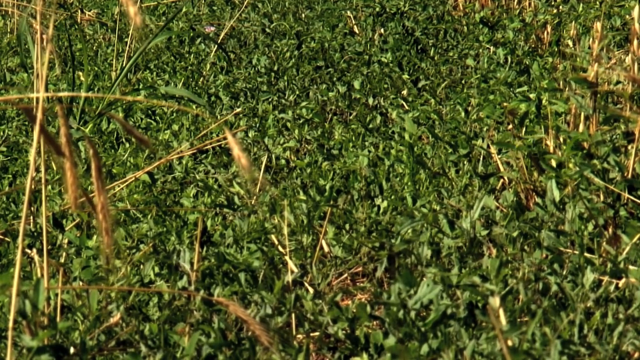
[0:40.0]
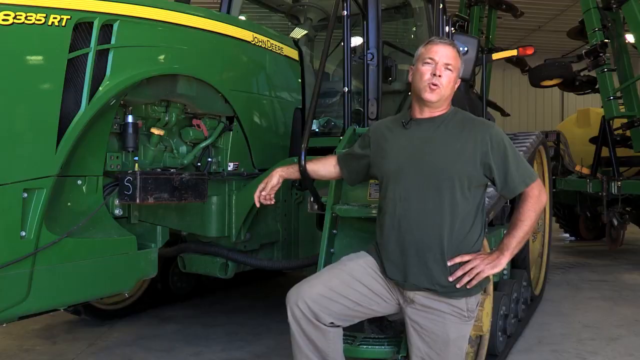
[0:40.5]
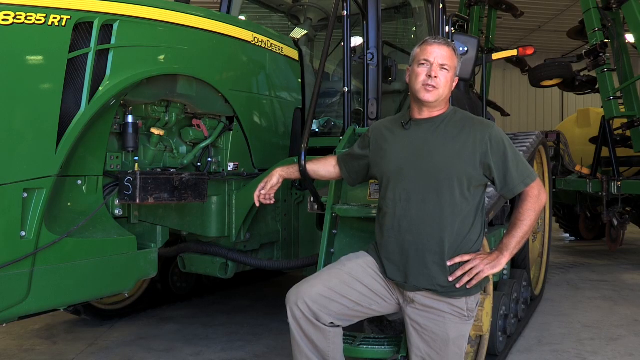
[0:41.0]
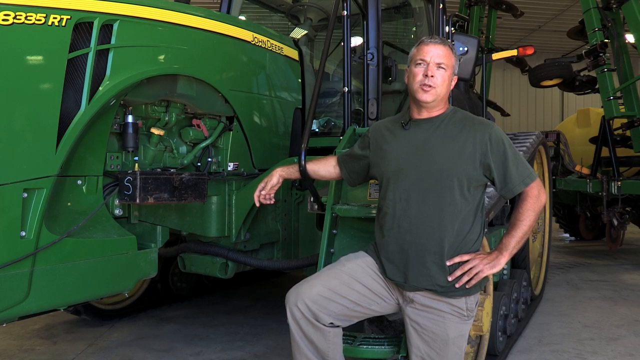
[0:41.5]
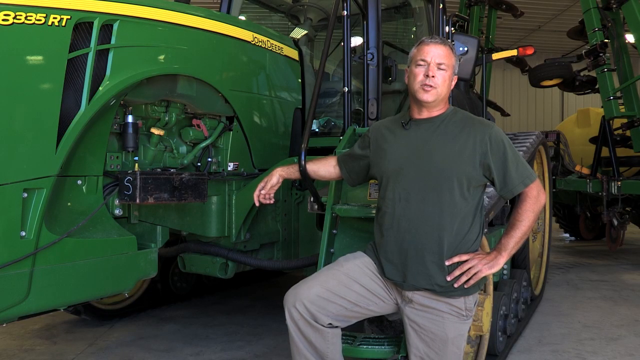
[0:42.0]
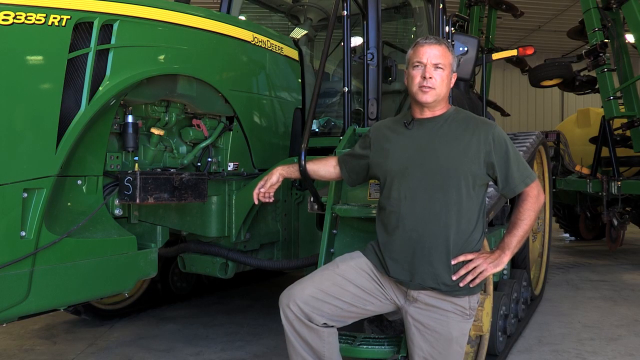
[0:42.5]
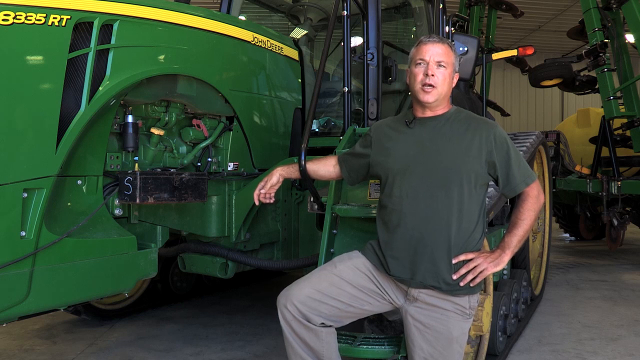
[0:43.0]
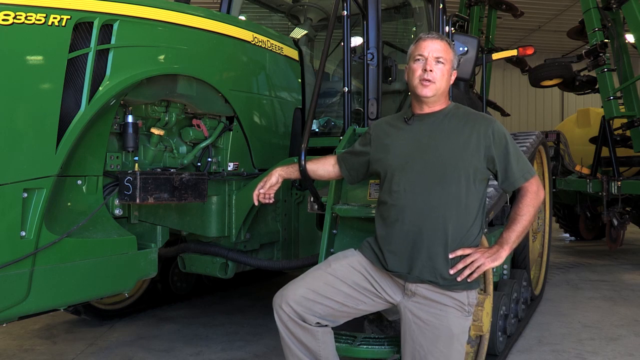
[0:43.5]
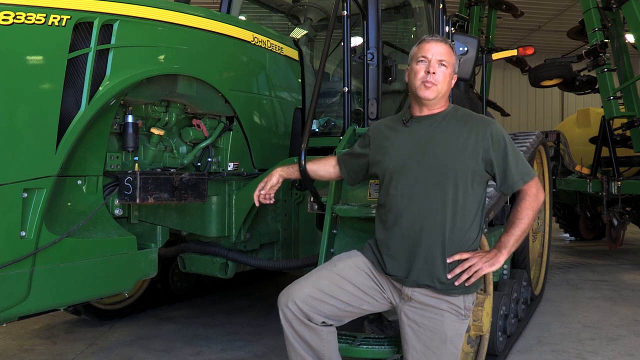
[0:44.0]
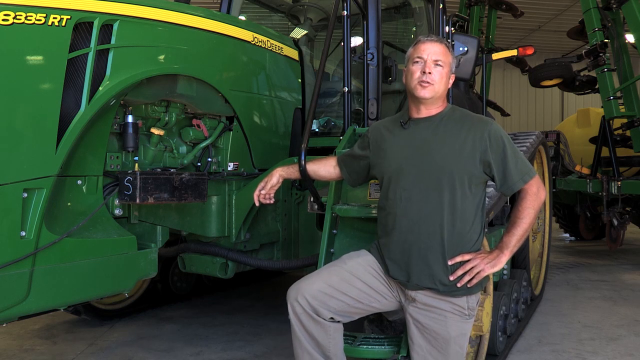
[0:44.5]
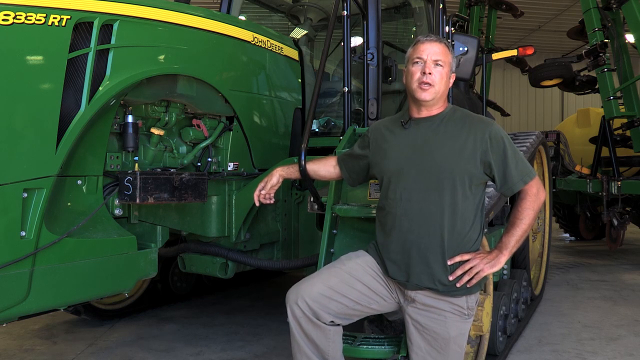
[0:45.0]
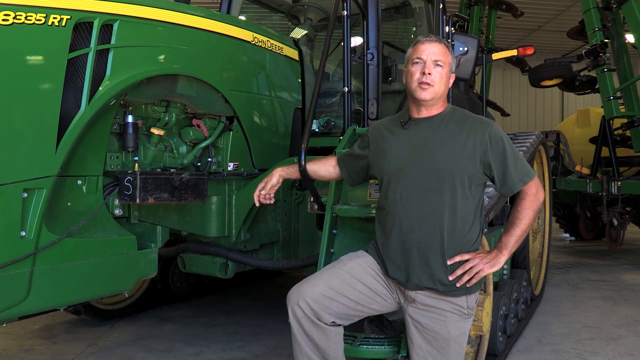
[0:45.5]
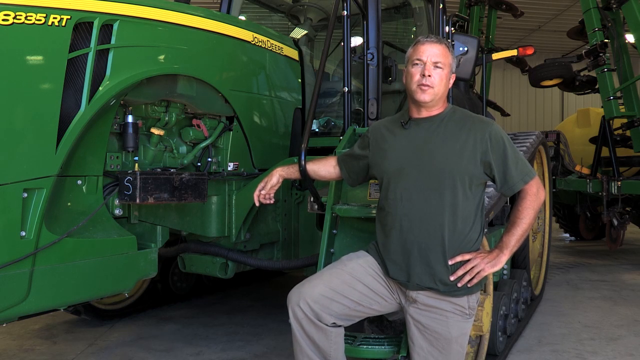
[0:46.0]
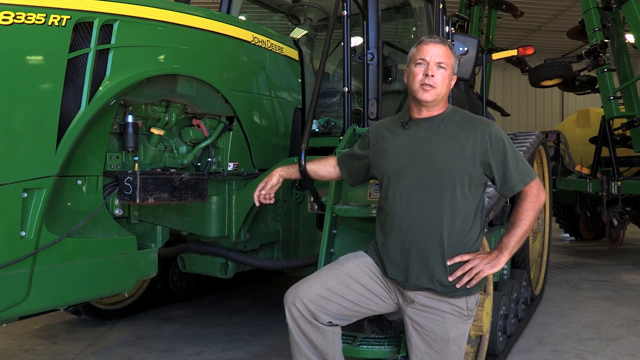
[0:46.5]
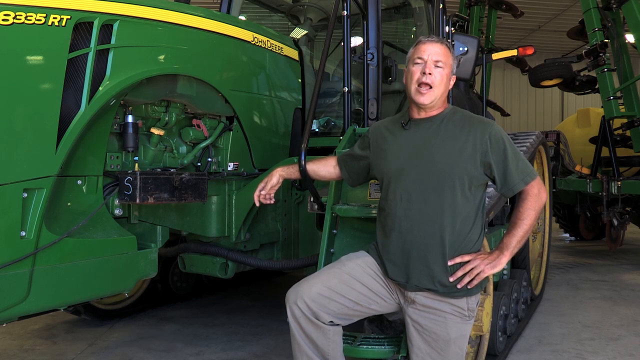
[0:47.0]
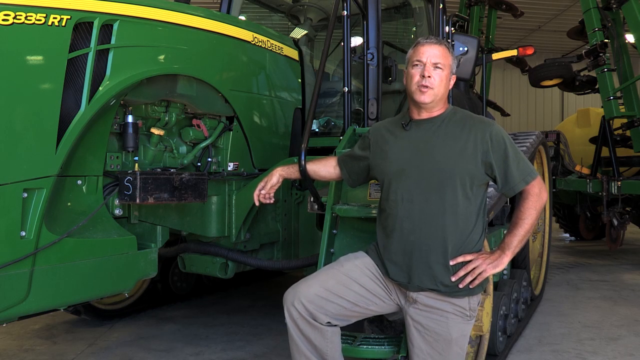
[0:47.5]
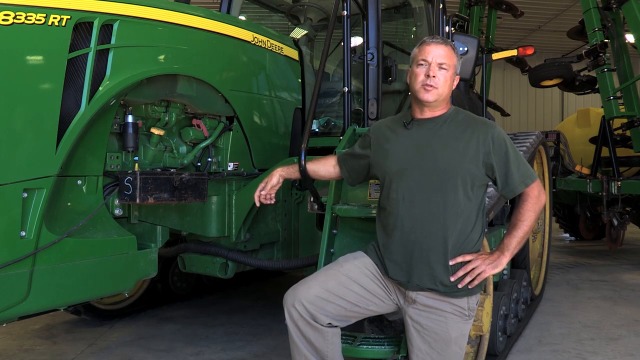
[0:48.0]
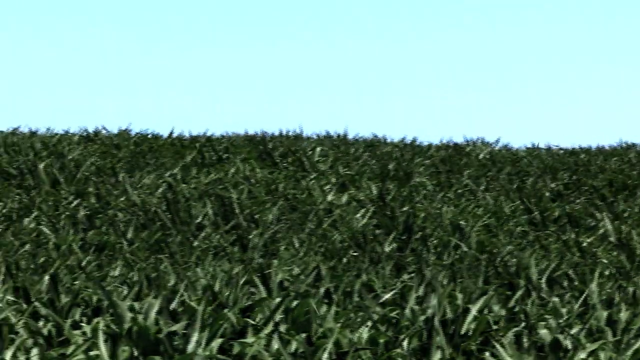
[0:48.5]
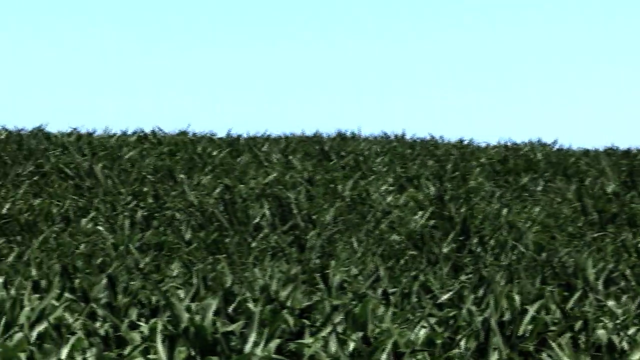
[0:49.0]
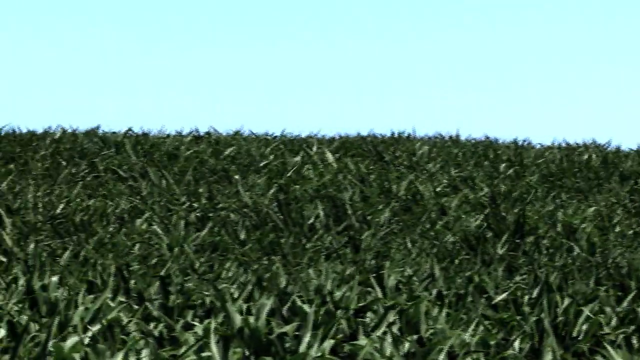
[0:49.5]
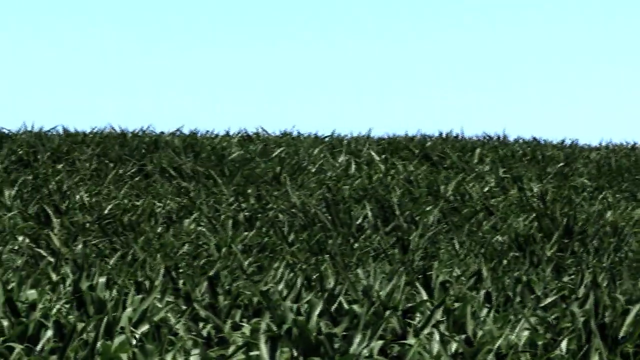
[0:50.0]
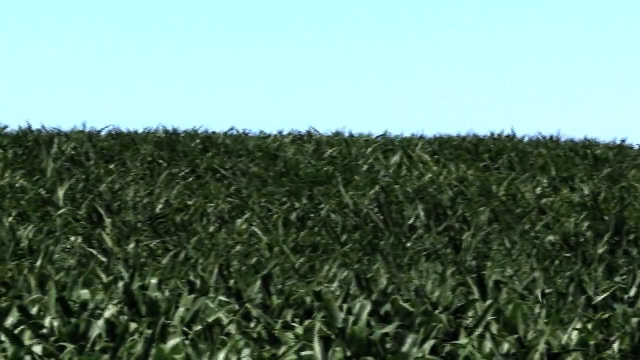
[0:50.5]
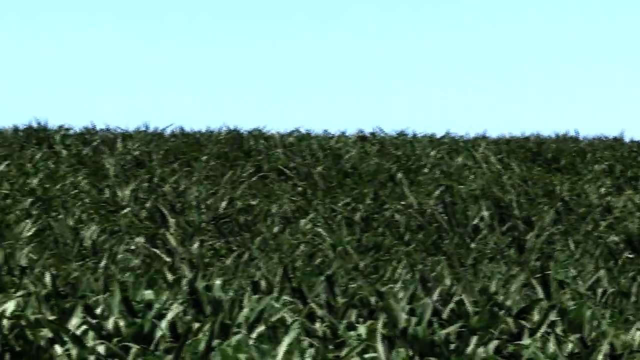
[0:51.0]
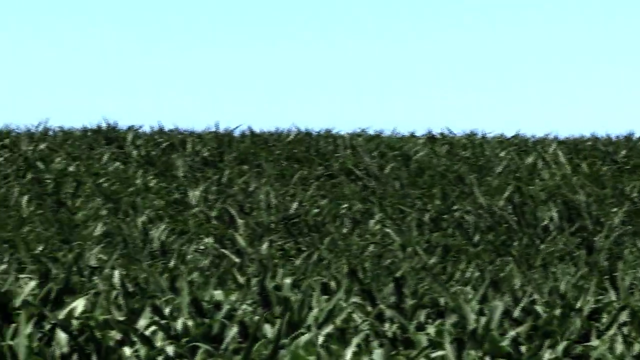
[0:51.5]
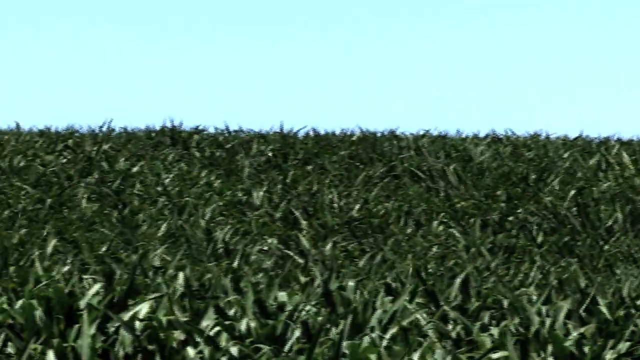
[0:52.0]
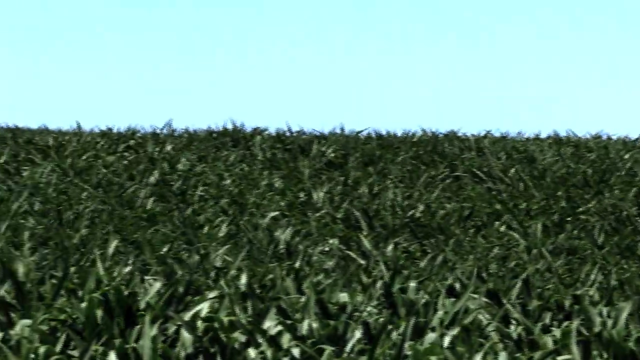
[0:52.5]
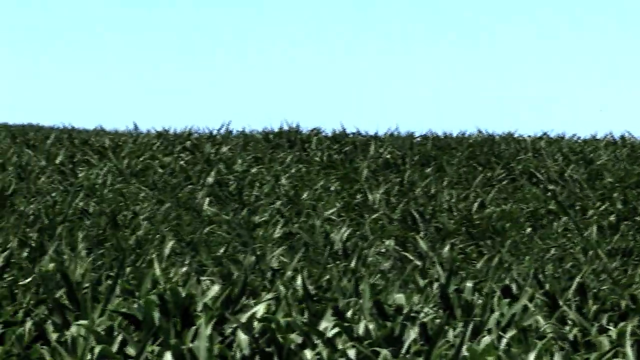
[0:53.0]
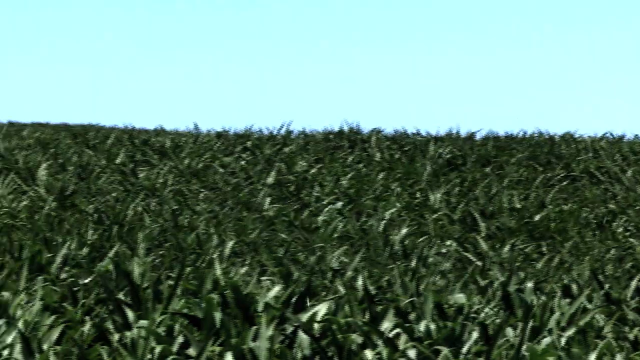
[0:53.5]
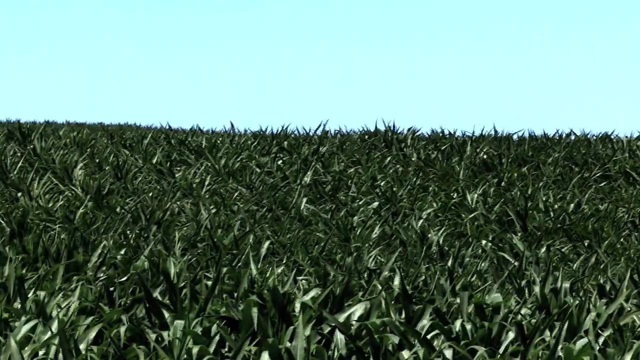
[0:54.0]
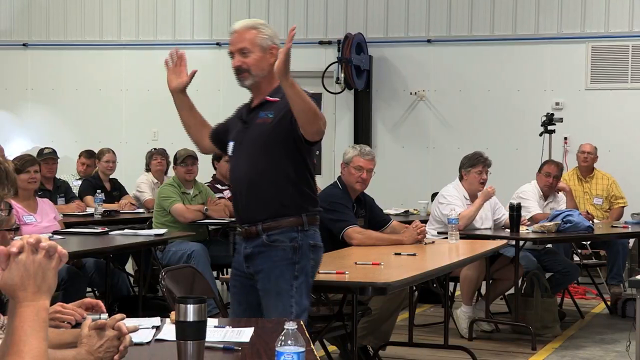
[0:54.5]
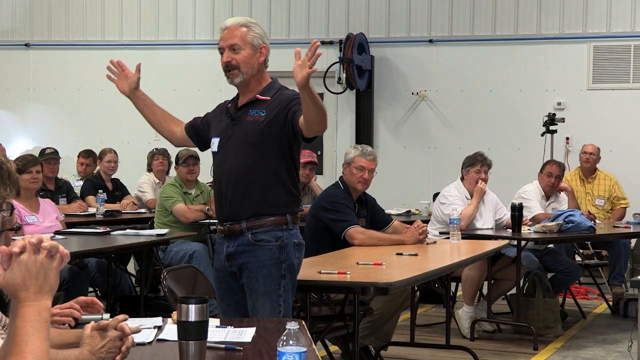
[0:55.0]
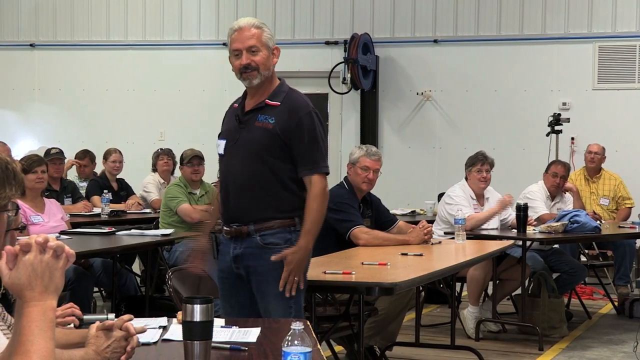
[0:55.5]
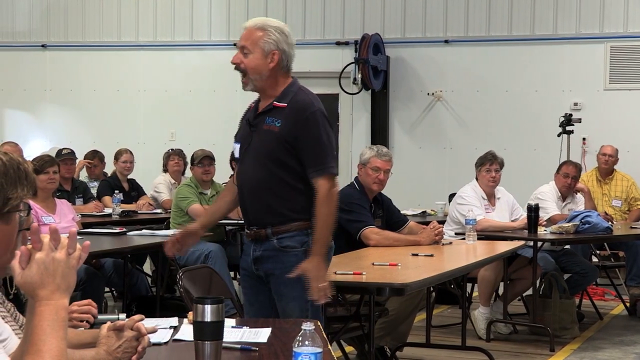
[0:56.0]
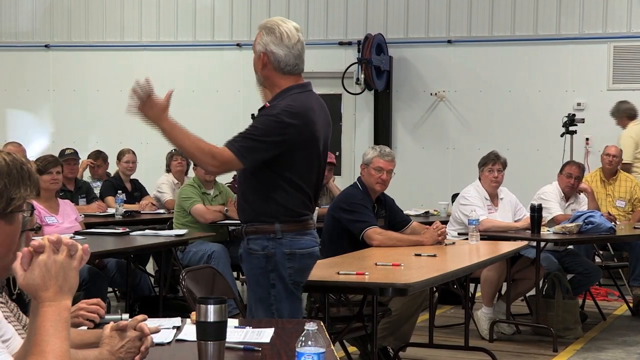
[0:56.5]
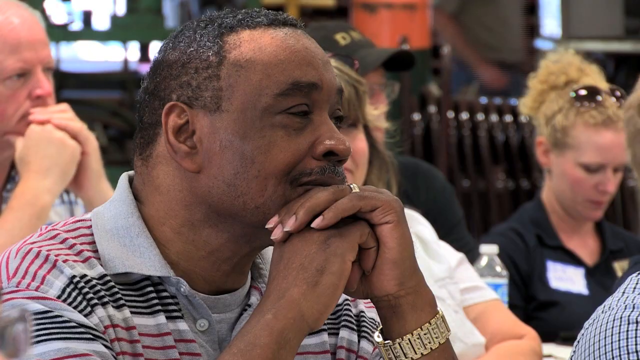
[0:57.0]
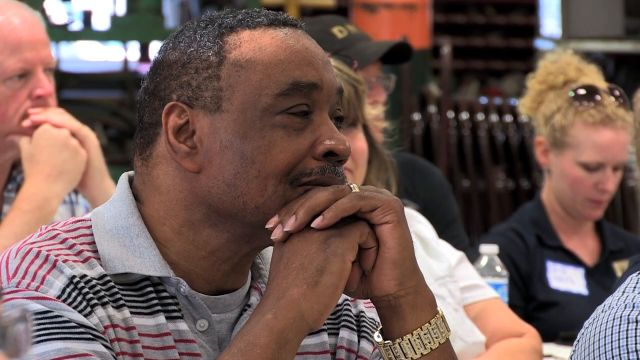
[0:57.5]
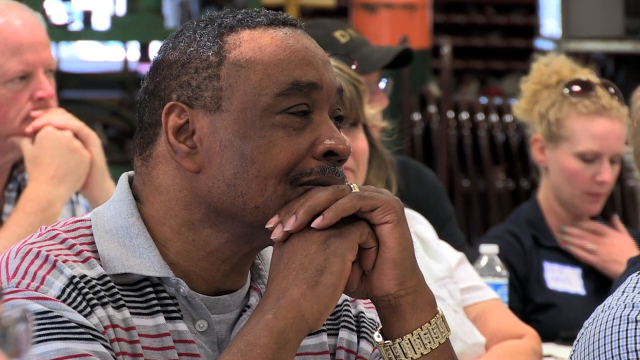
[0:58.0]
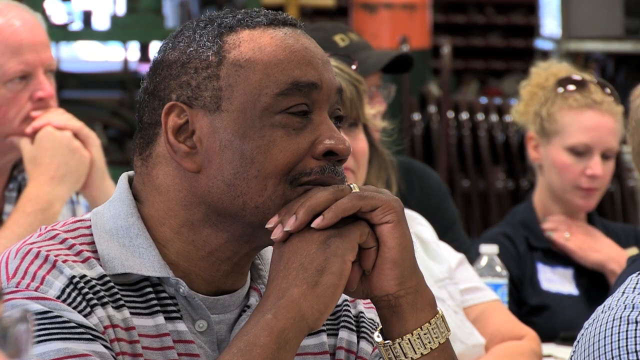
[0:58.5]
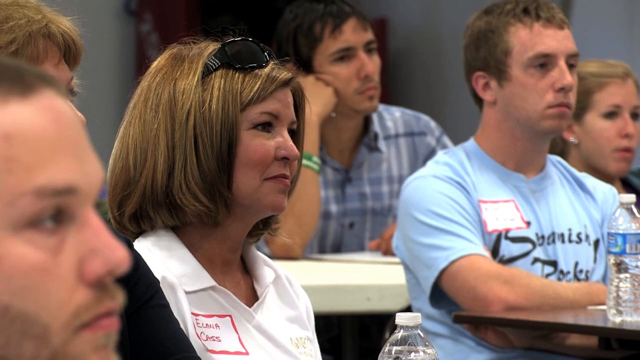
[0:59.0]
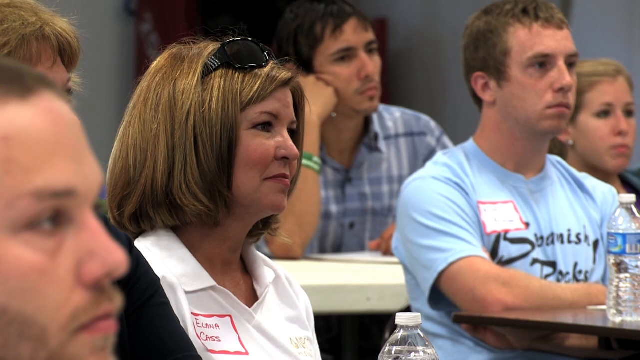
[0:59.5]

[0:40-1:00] The camera goes back to the person talking next to the tractor. He wears black pants and a green shirt that matches the all-green tractor. The gigantic cornfield swings in the wind, its leaves moving. The camera zooms in and turns, then cuts to what looks like a classroom or a meeting, where several people sit watching a person talking in the middle of the room. The speaker wears jeans and a black shirt and holds his arms wide open. Some of the seated people hold their chins, and the zoom shows everyone looking carefully and attentively at him.